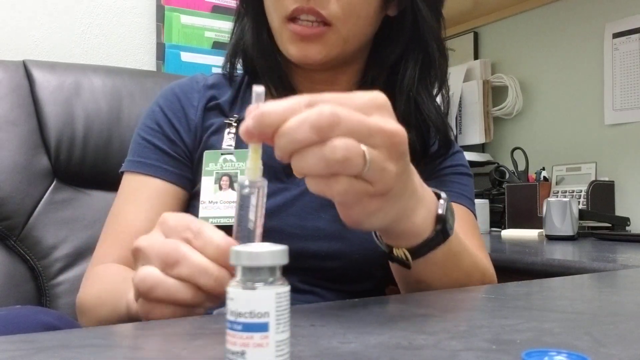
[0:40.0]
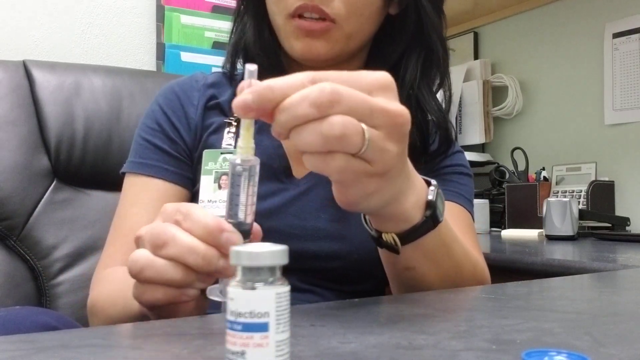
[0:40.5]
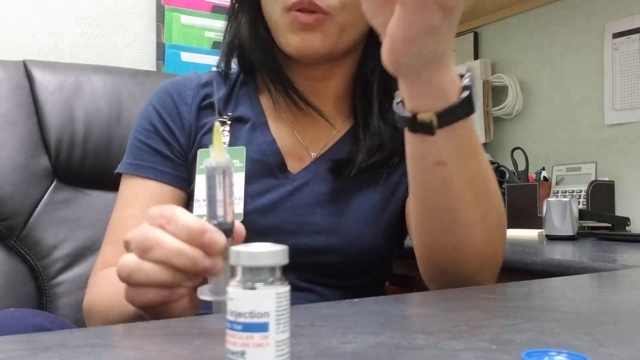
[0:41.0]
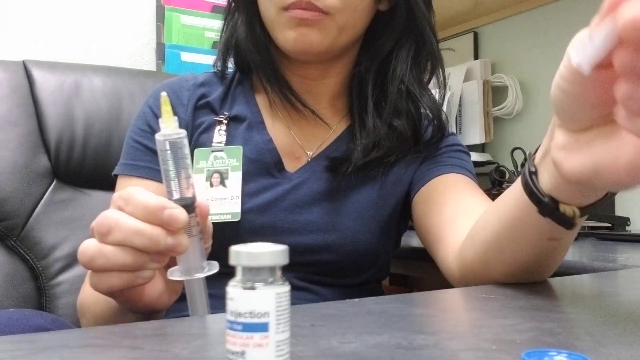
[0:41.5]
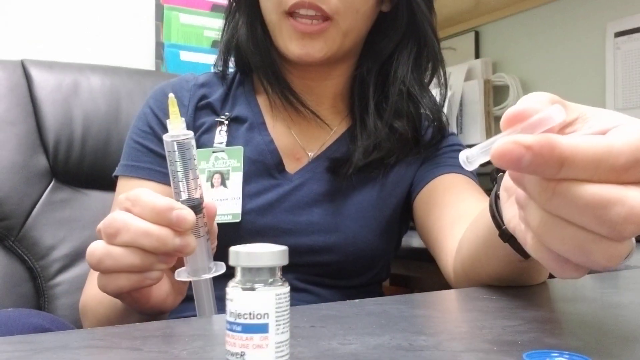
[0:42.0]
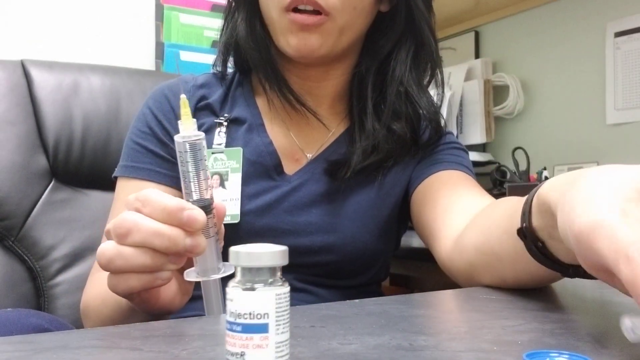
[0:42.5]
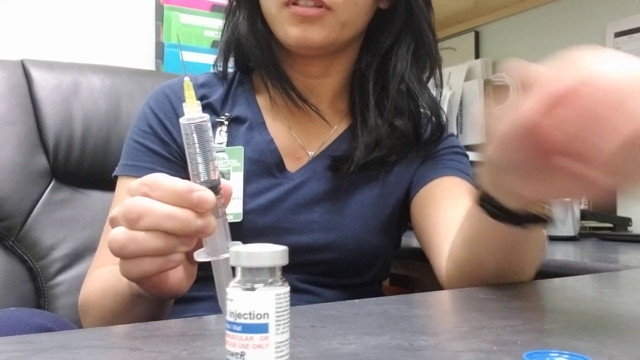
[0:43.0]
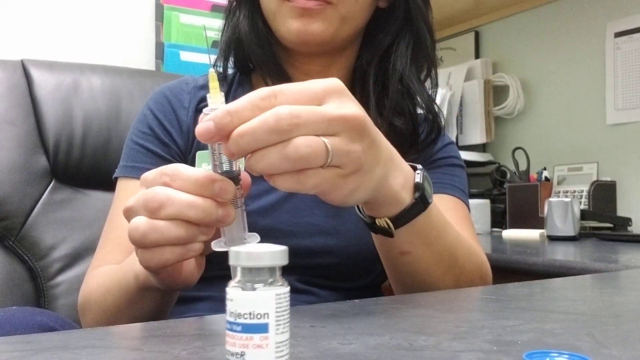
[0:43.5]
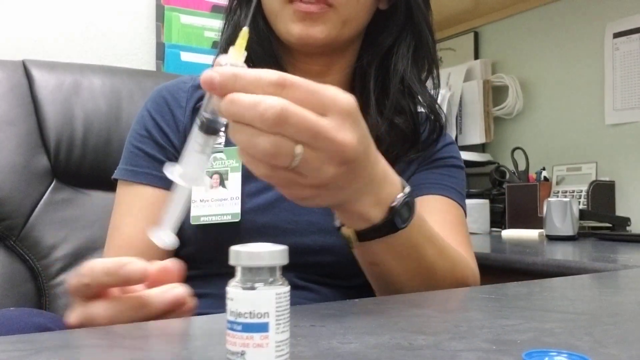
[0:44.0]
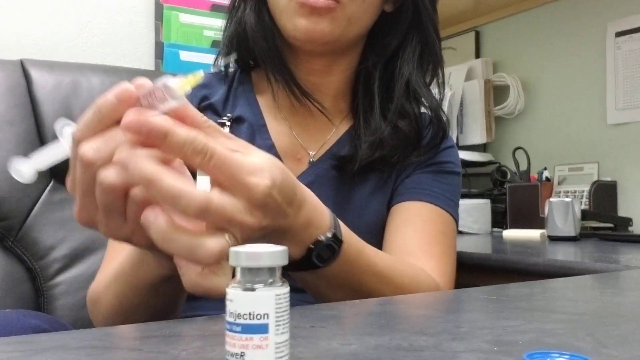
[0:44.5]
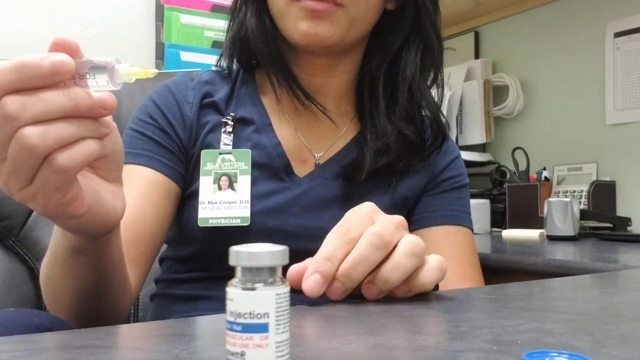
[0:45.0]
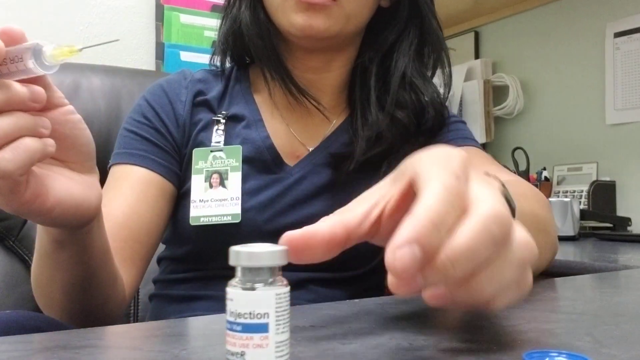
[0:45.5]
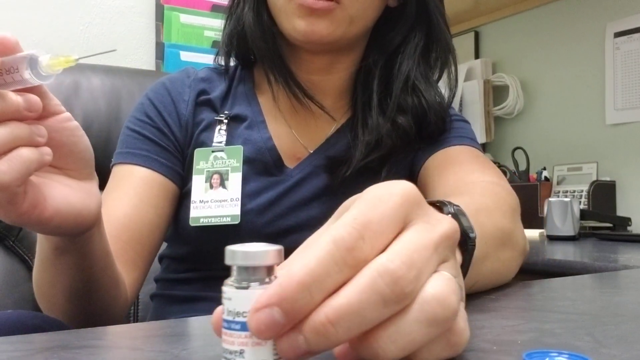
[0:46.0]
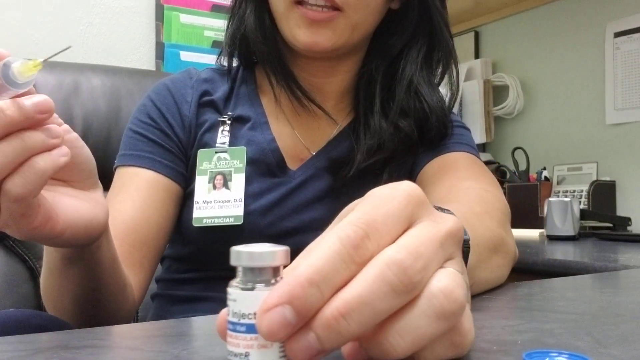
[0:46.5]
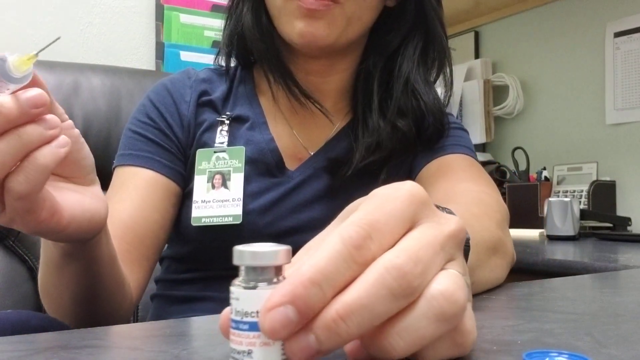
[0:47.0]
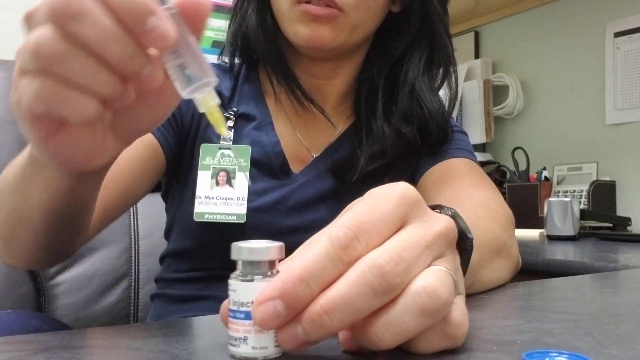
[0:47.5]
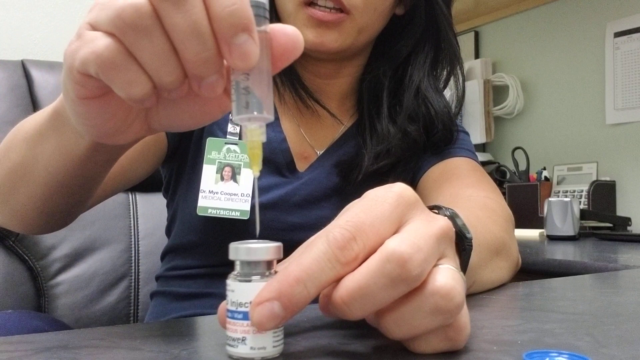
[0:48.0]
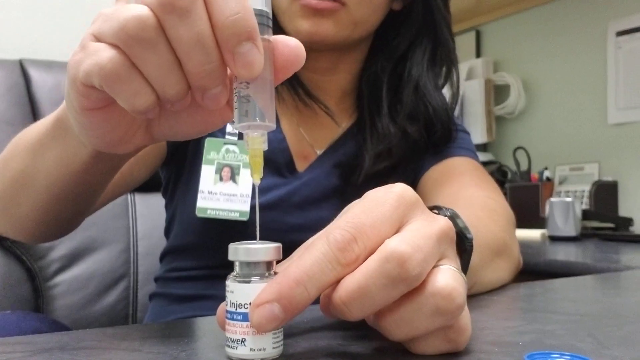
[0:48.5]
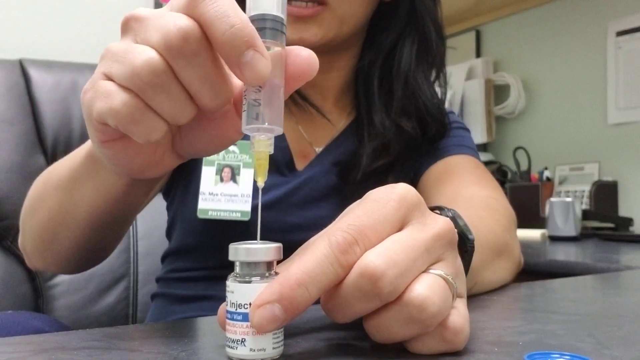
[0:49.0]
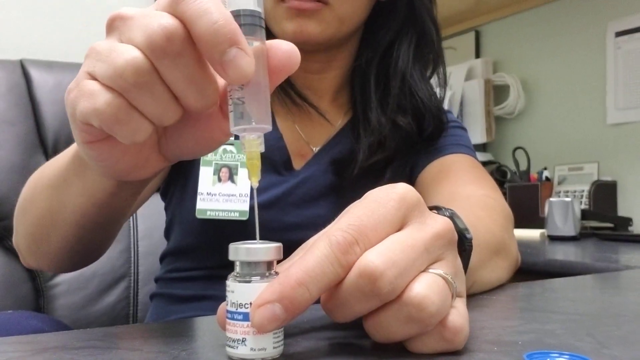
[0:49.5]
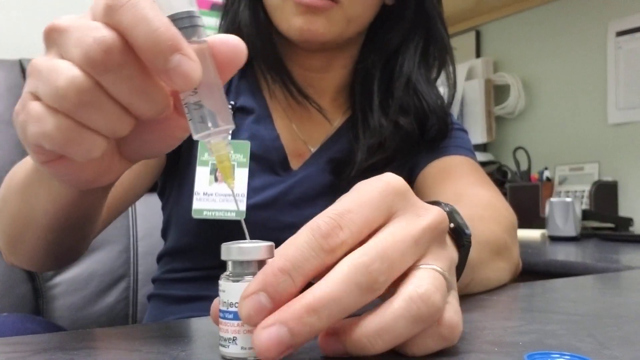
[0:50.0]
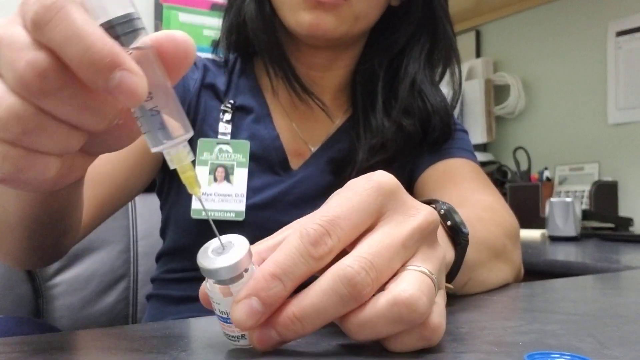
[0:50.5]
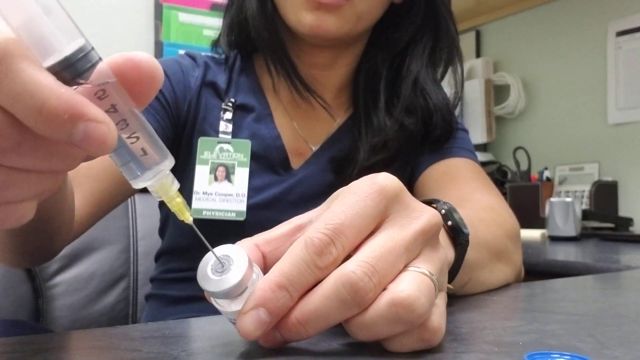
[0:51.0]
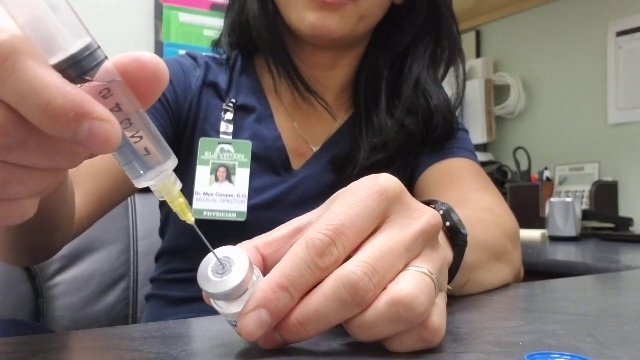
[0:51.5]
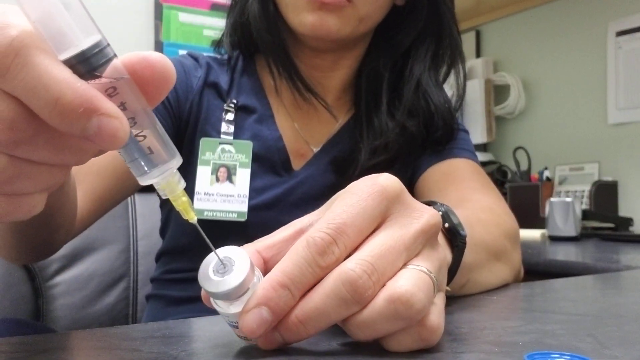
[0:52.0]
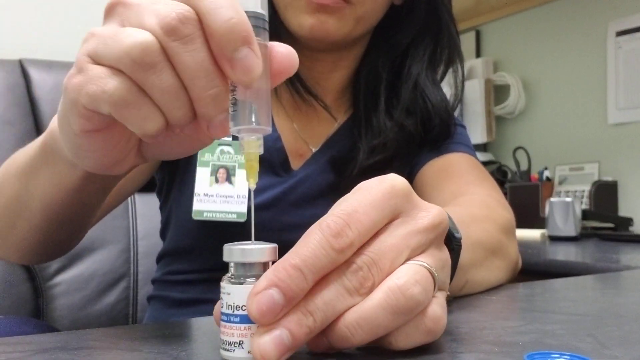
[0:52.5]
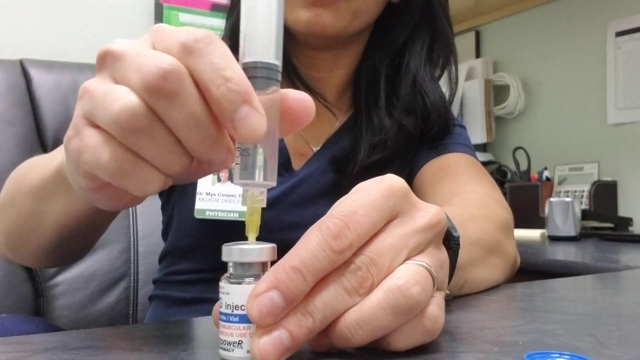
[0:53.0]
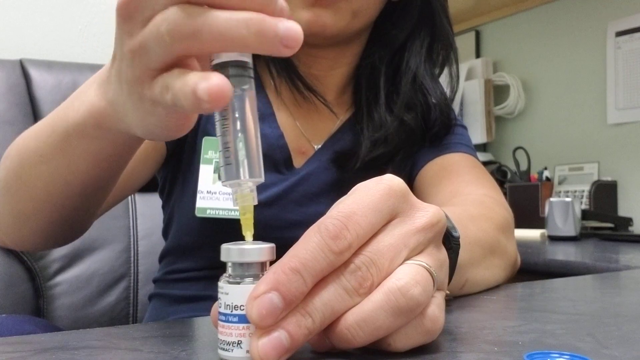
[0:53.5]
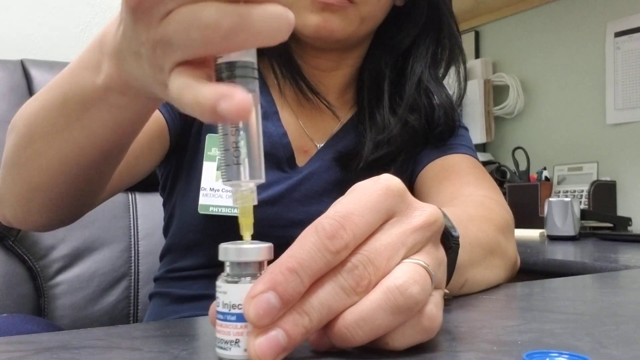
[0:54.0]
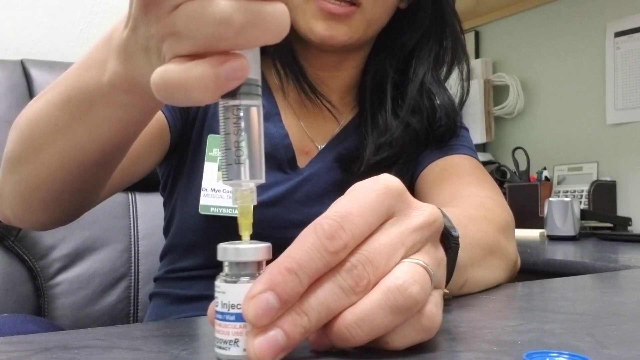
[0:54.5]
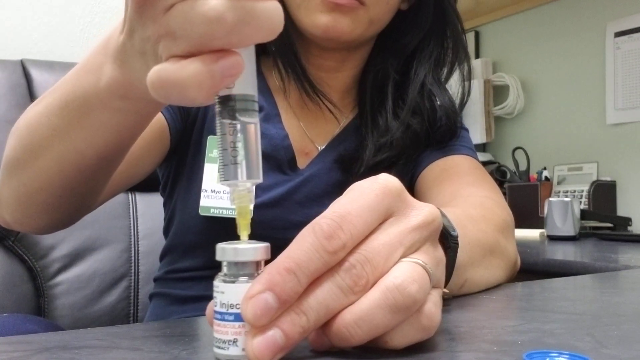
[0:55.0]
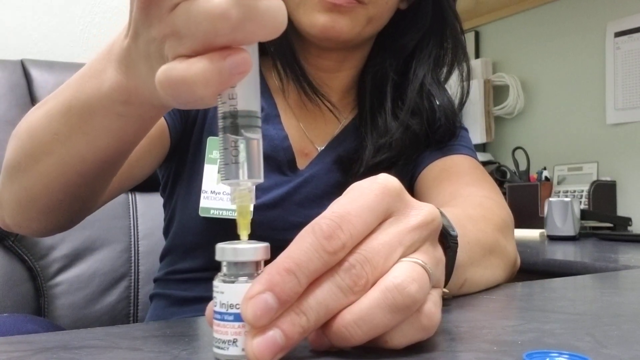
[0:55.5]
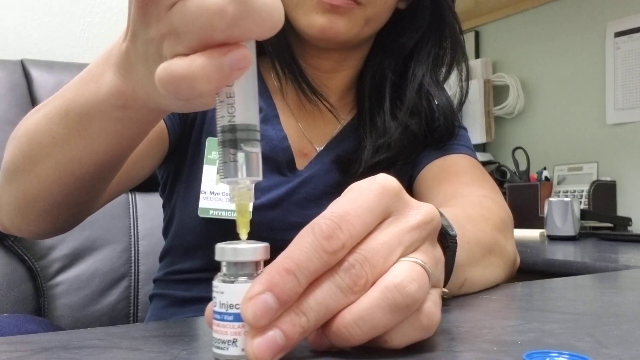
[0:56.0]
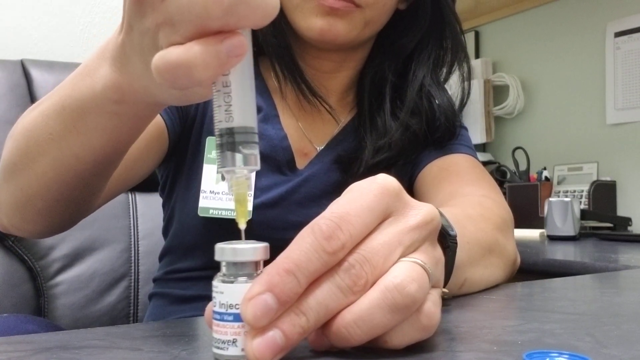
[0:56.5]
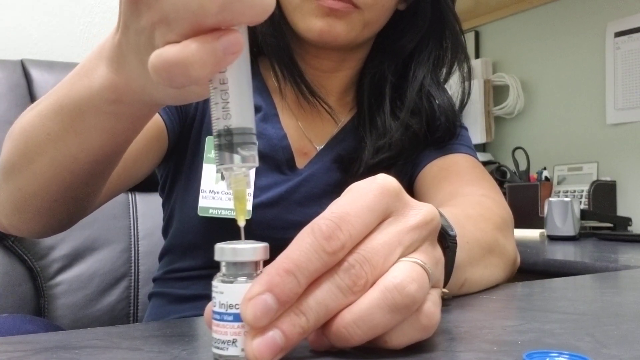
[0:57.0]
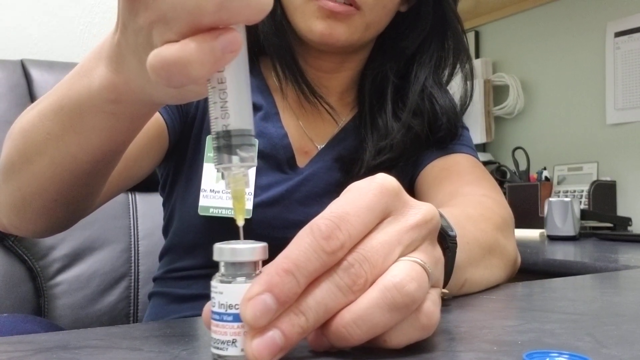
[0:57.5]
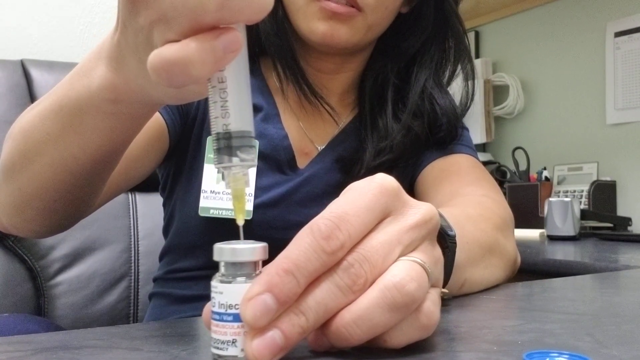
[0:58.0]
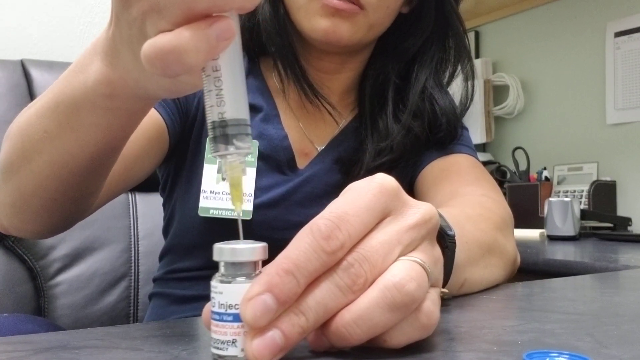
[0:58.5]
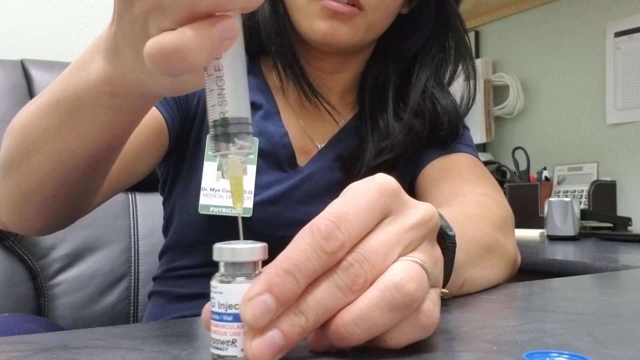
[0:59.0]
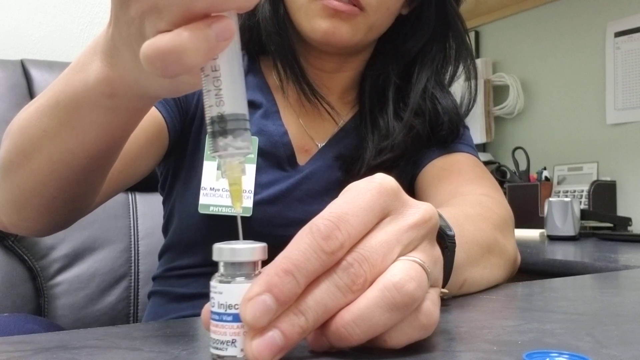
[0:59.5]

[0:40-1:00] A female medical employee sits in an office chair with a name tag clipped to her right shoulder, speaking to the camera. In front of her is the medication, labeled "HCG injector", and she holds the injecting device. She takes the cap off the device, exposing the needle, pierces the needle into a spot on top of the bottle's cap, and pushes it in deep enough to withdraw some of the liquid inside. She speaks to the camera the entire time. With the needle firmly inserted, she presses down and a suction cup goes down the tube, then back up, withdrawing the liquid. The scene ends mid-extraction.